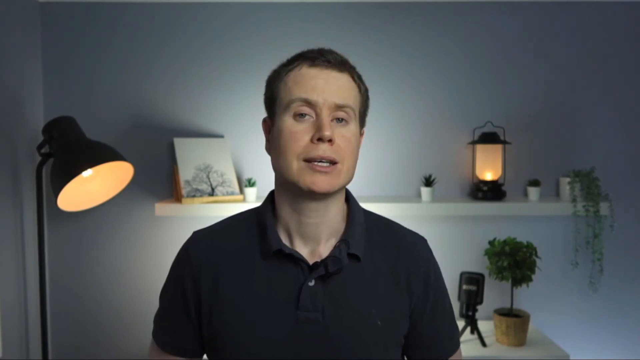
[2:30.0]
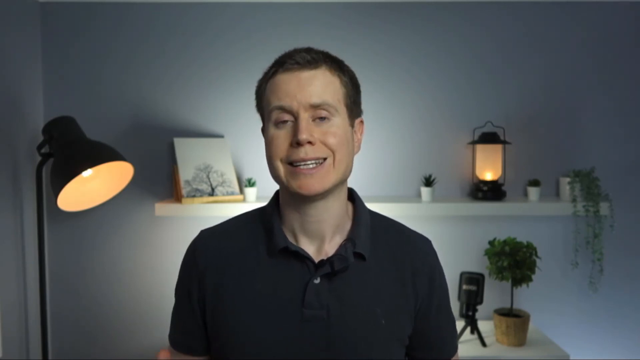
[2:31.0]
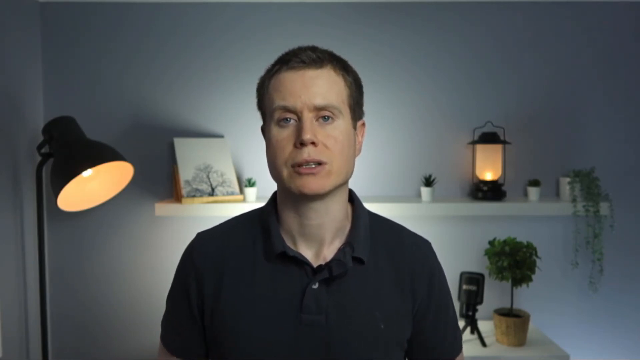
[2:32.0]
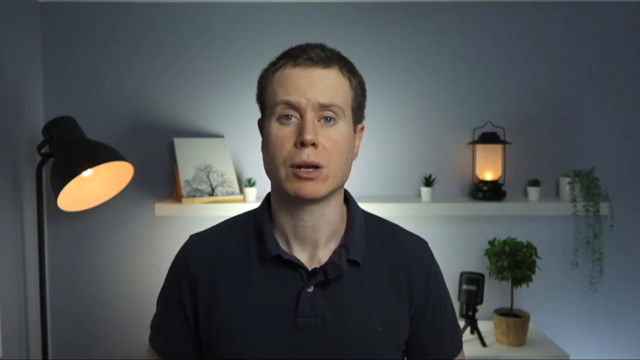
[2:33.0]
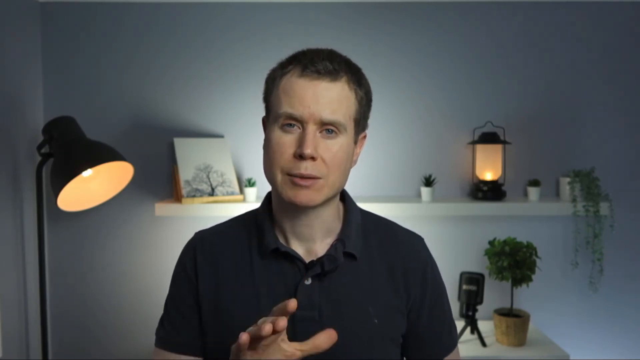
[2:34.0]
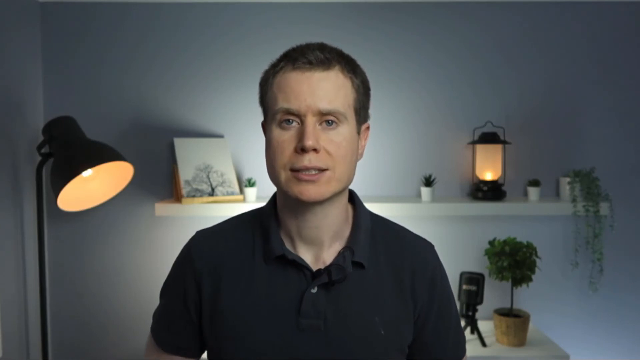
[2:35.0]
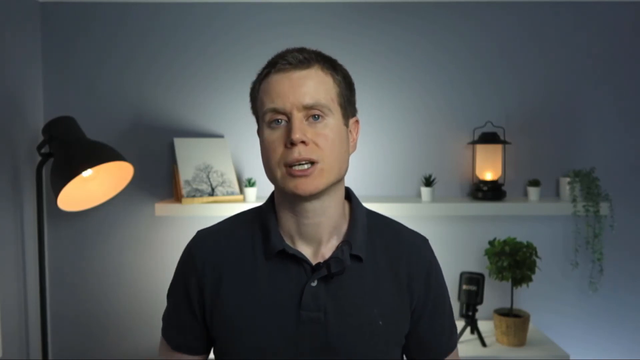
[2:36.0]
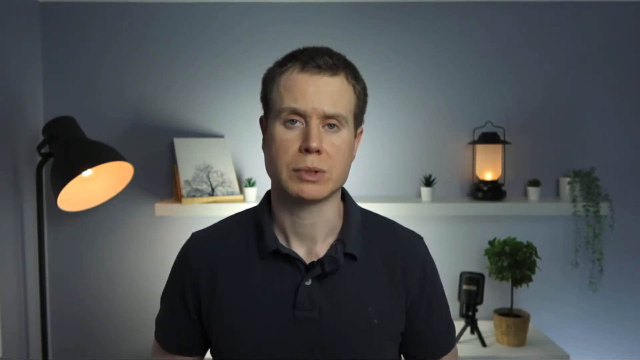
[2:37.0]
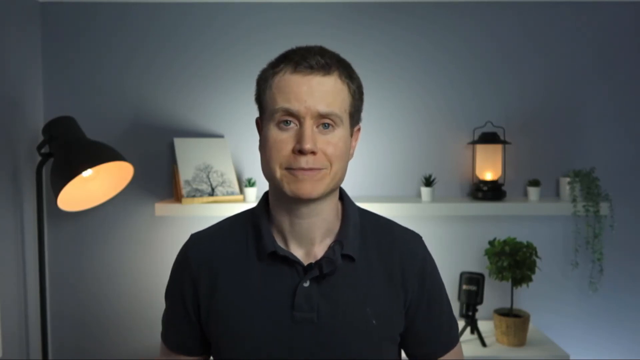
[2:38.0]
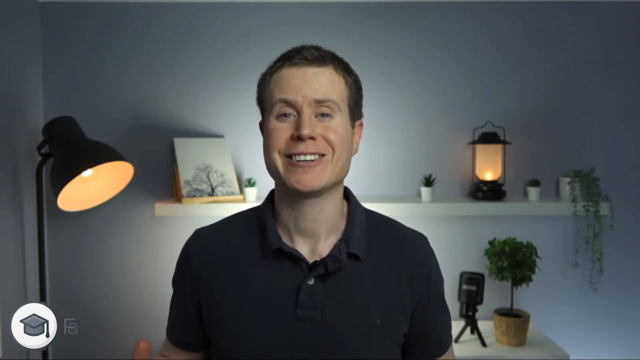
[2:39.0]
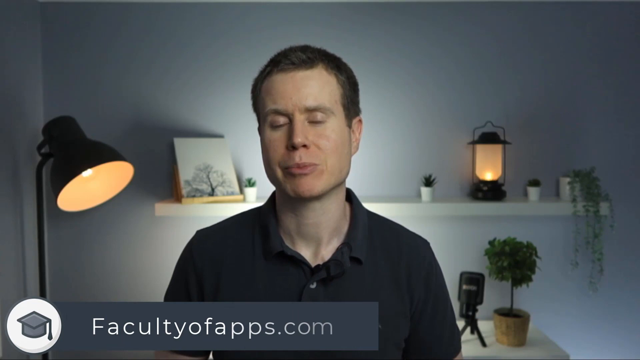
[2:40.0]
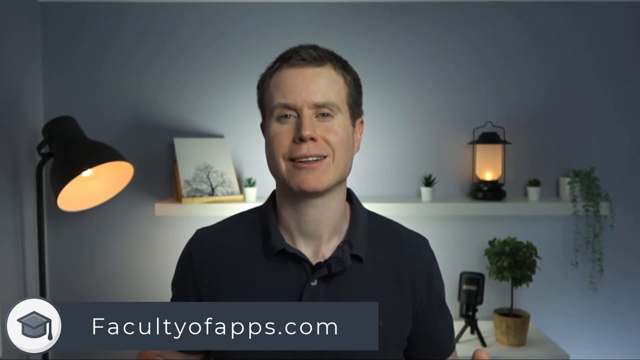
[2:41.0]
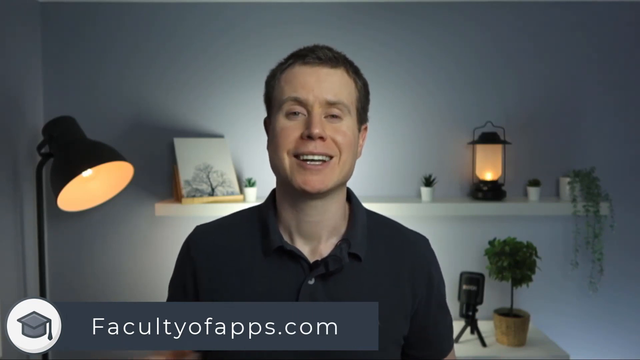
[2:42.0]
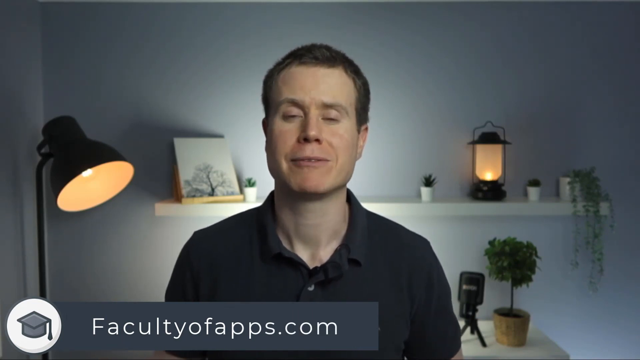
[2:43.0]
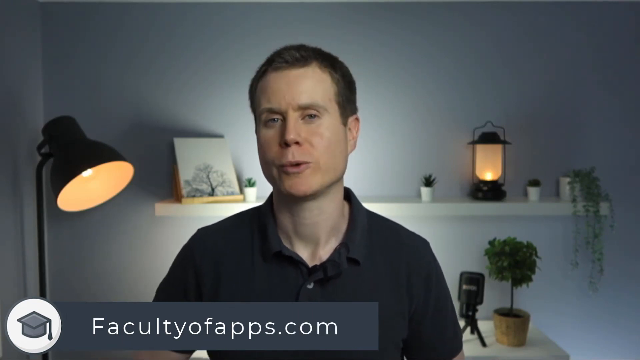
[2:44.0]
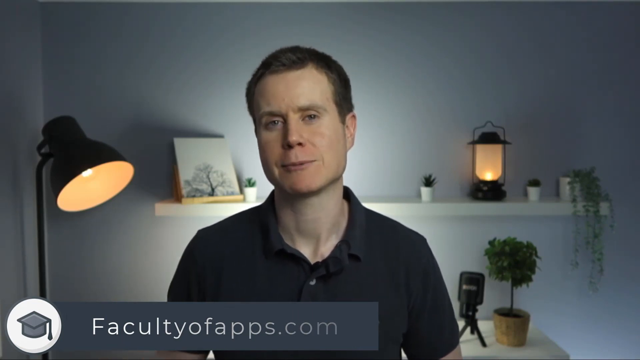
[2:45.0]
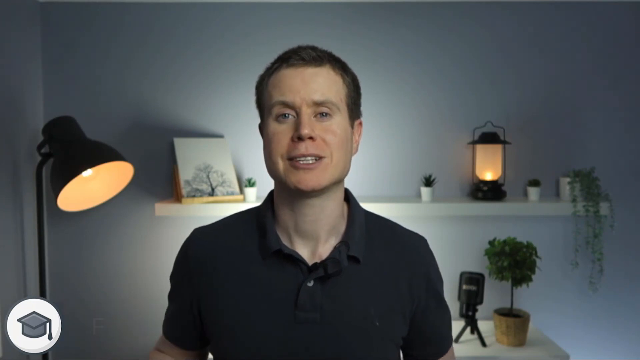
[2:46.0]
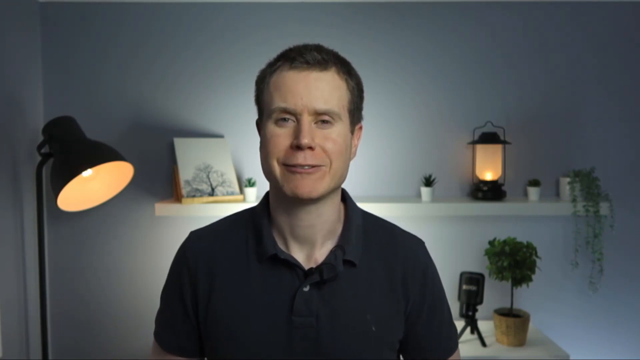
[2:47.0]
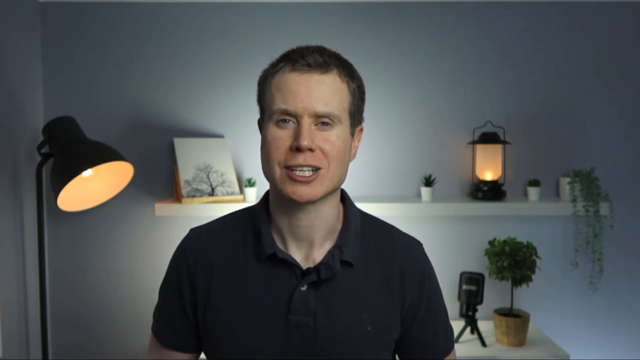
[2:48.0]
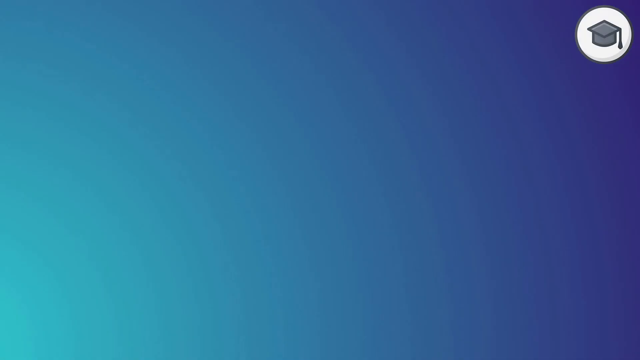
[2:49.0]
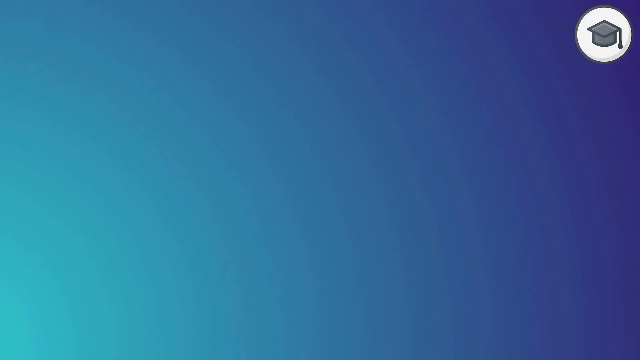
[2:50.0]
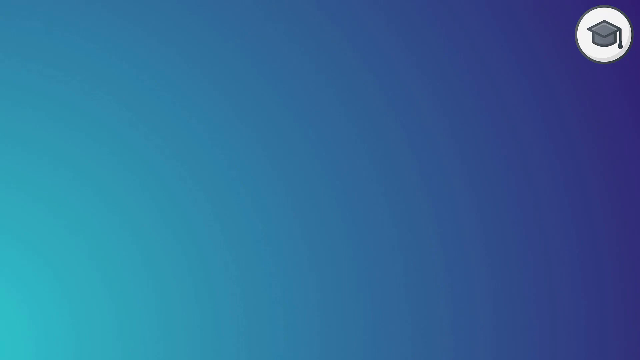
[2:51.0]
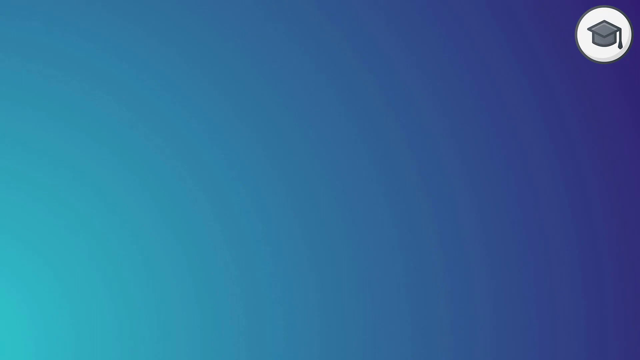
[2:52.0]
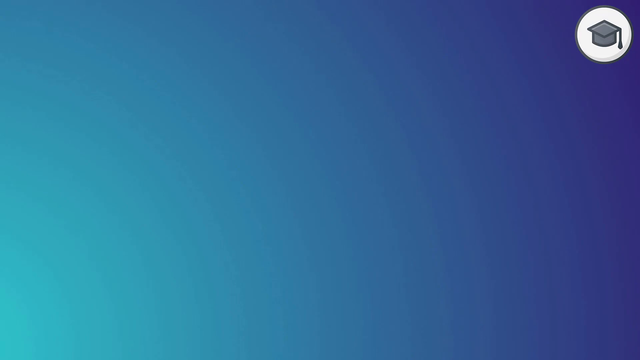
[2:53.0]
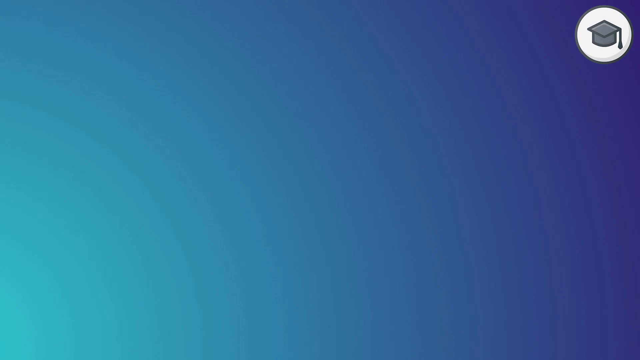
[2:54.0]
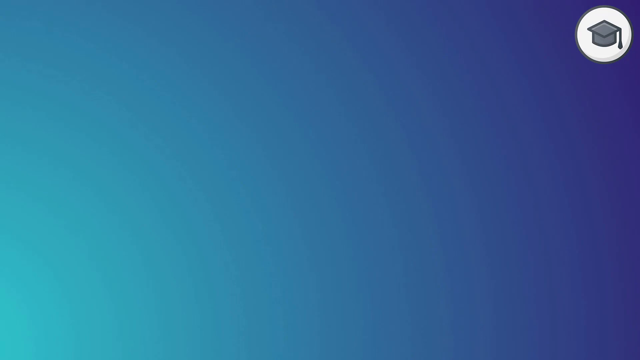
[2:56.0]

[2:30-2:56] A man in a black shirt with a single button on his collar stands in front of a white wall. A shelf on the wall has a picture of a leafless tree on its left side. To his left in the corner is a lamp with a shade pointing down toward the floor. The man talks, tilting his head toward the left side of the screen, his lips moving. His right fingertips come up from the bottom of the screen as he talks with his hand. His right hand comes up with the palm sort of facing the camera but also sort of toward the right side of the screen, fingers extended, and he puts it down. He continues talking, and the fingertips of both hands come up from the bottom of the screen. He looks like he is smiling. At the bottom left of the screen a white circle appears containing a black graduation cap with a black tassel. A dark gray banner comes up to the right of the tassel with "Faculty of Apps.com" in white letters. The man continues to talk. The video then goes to the blue screen, with the circle with the tassel now in the top right corner.